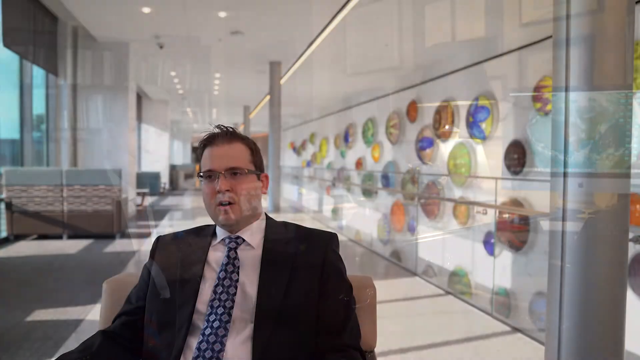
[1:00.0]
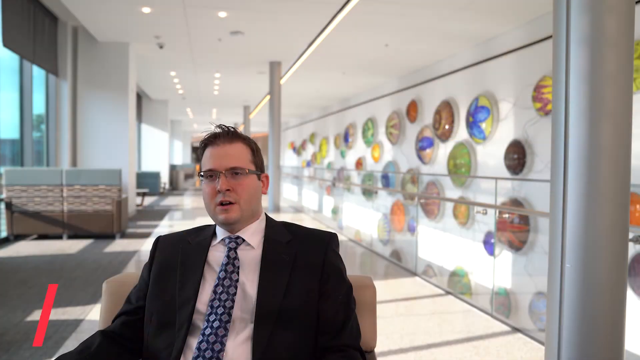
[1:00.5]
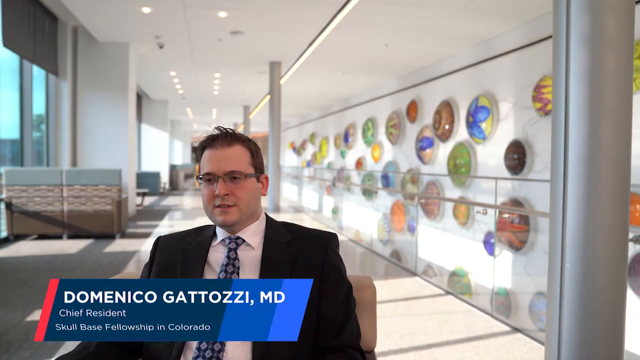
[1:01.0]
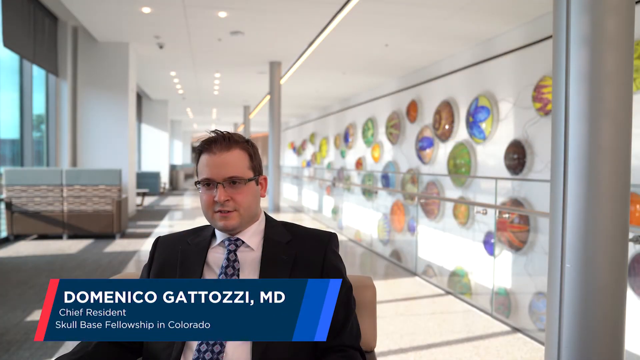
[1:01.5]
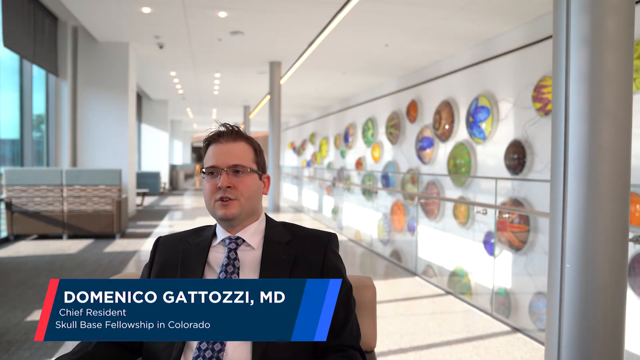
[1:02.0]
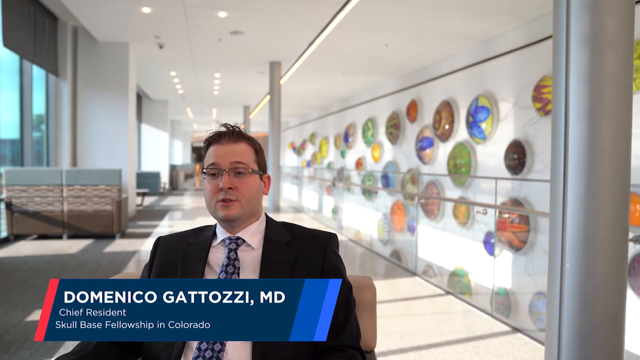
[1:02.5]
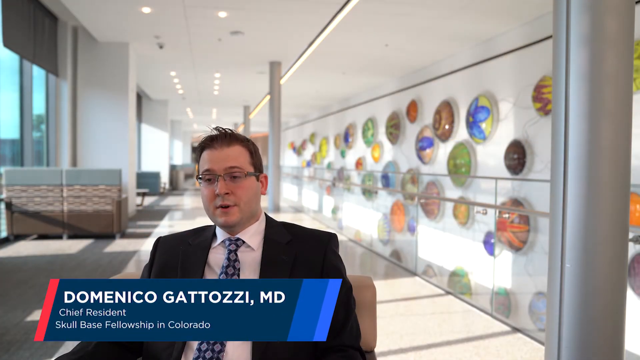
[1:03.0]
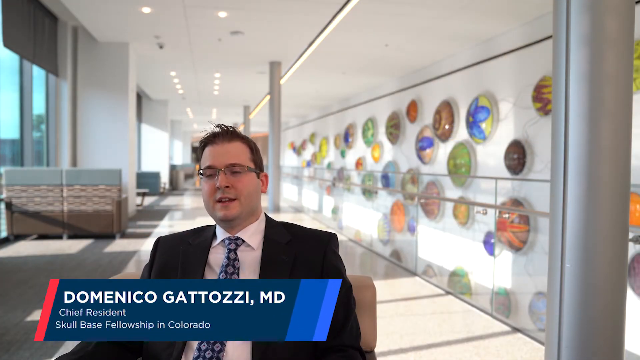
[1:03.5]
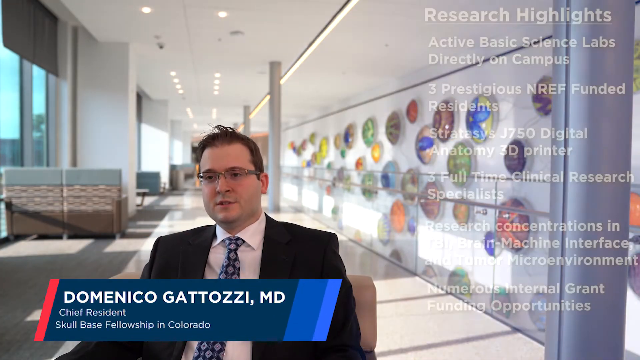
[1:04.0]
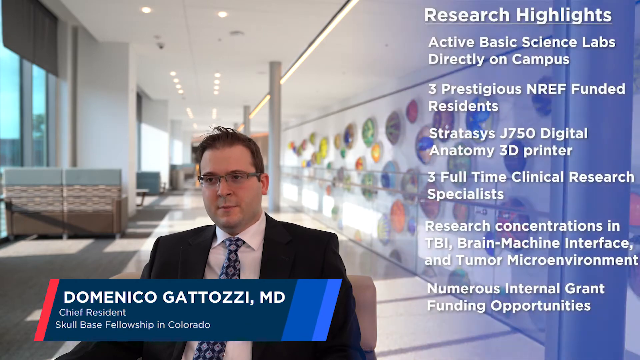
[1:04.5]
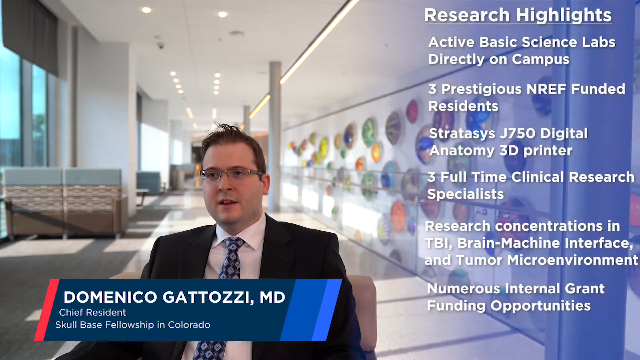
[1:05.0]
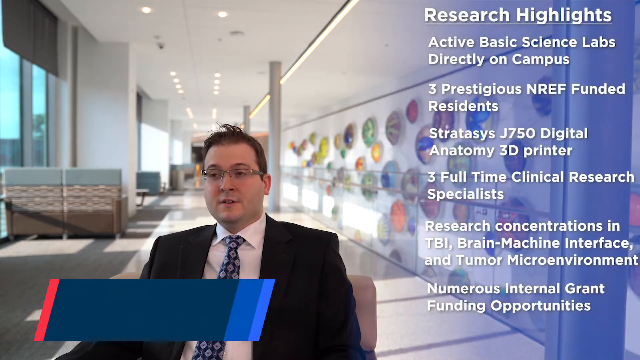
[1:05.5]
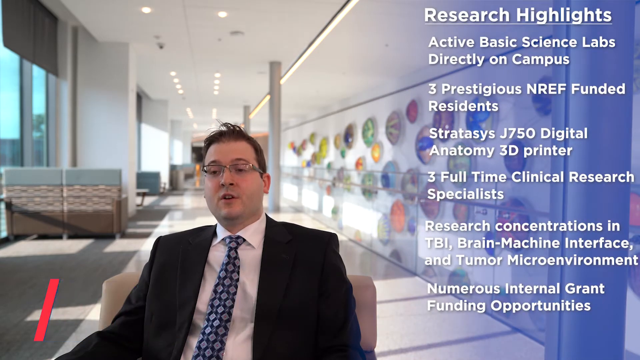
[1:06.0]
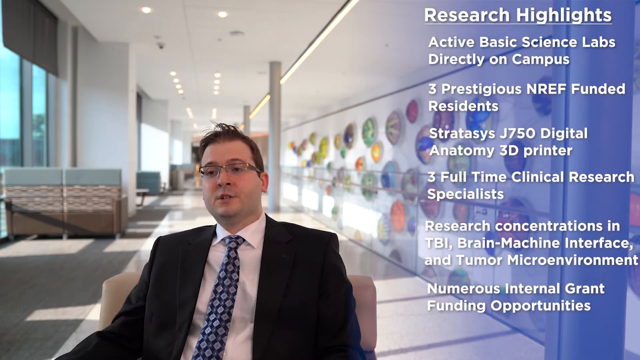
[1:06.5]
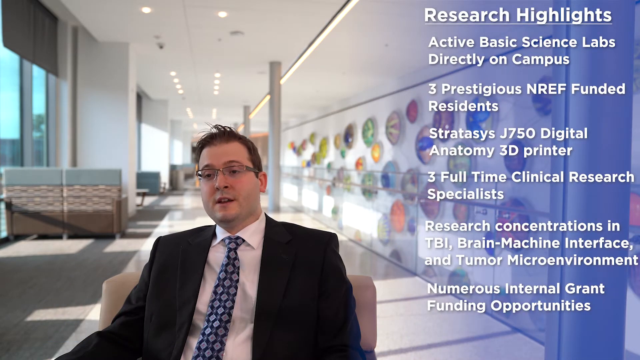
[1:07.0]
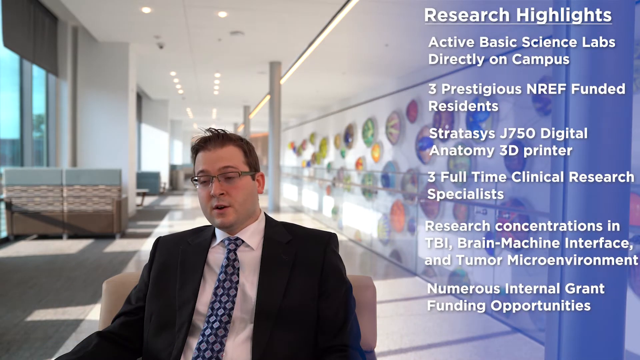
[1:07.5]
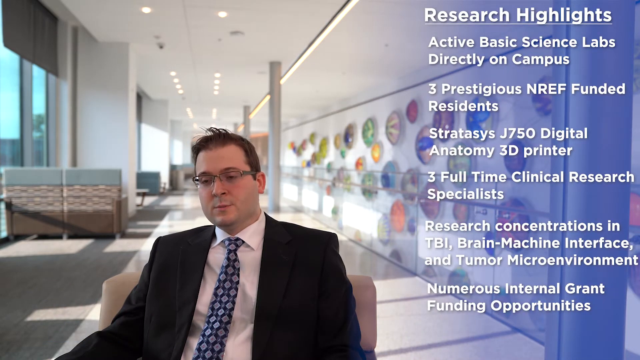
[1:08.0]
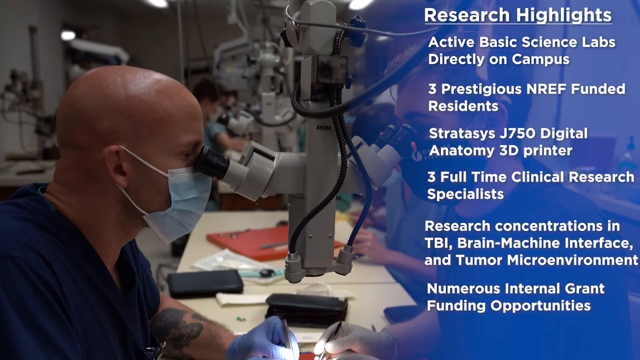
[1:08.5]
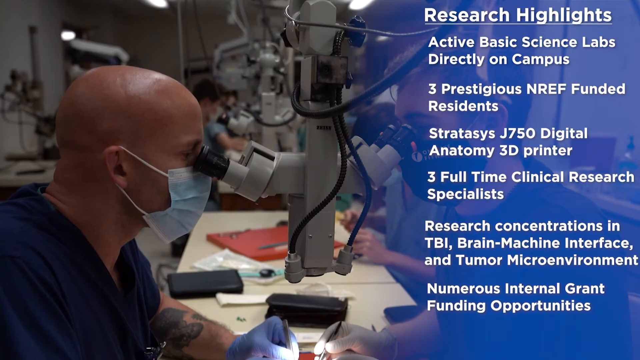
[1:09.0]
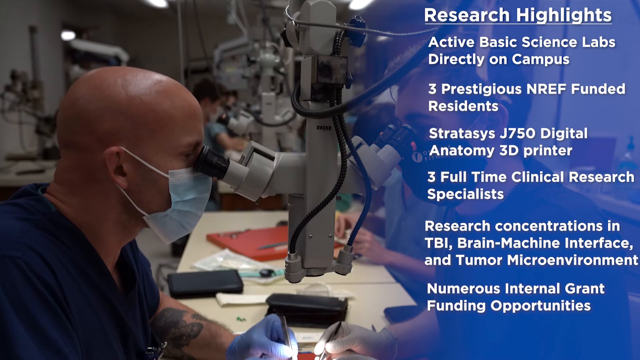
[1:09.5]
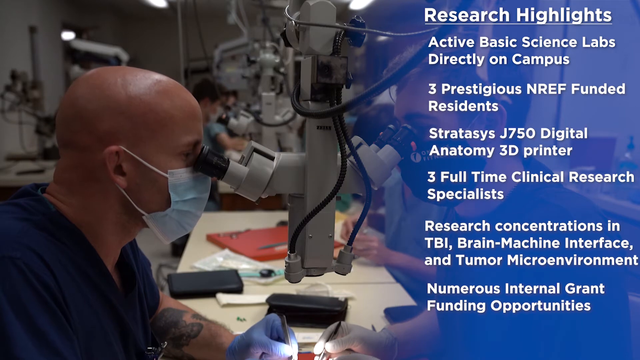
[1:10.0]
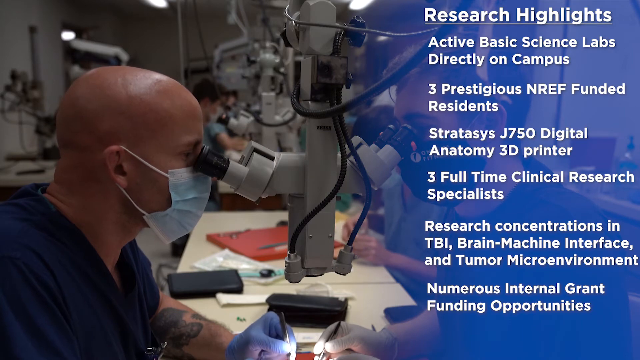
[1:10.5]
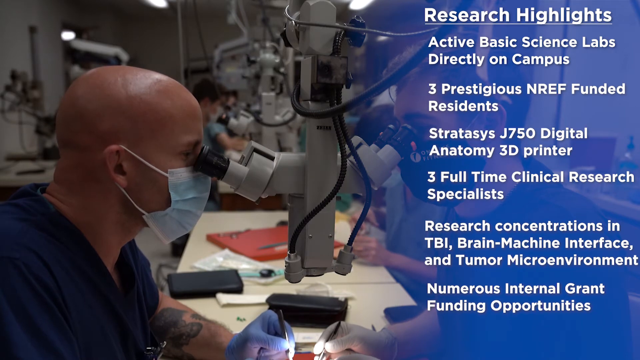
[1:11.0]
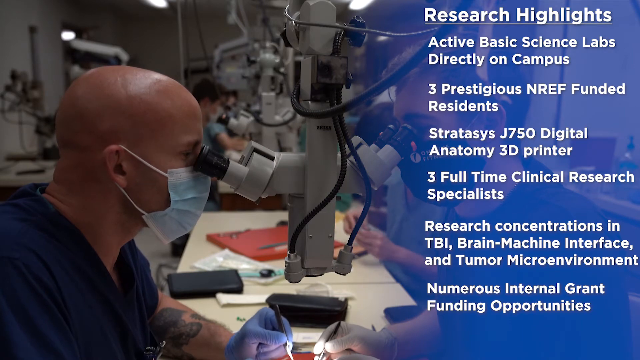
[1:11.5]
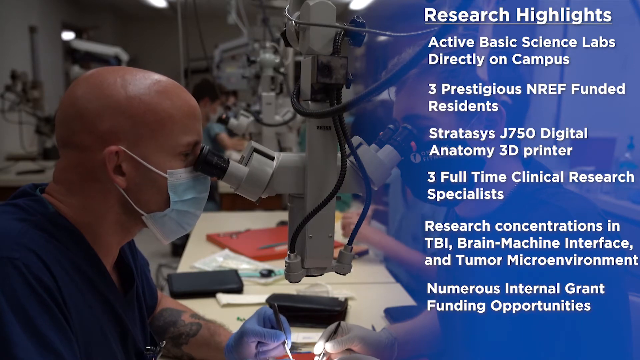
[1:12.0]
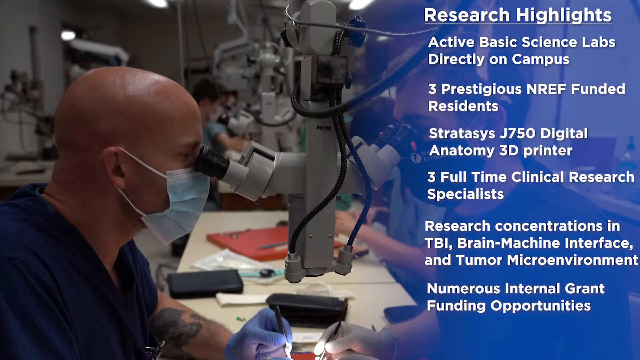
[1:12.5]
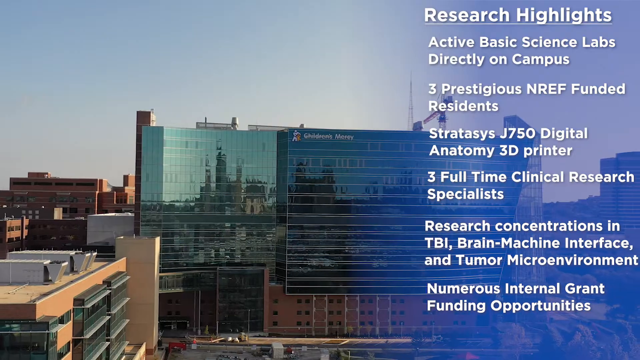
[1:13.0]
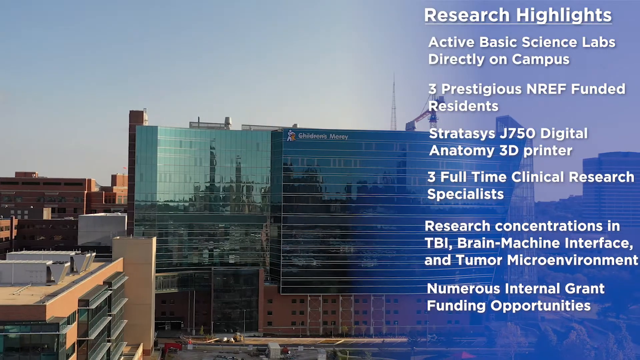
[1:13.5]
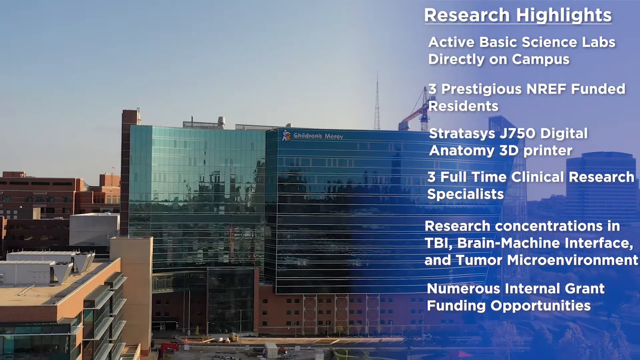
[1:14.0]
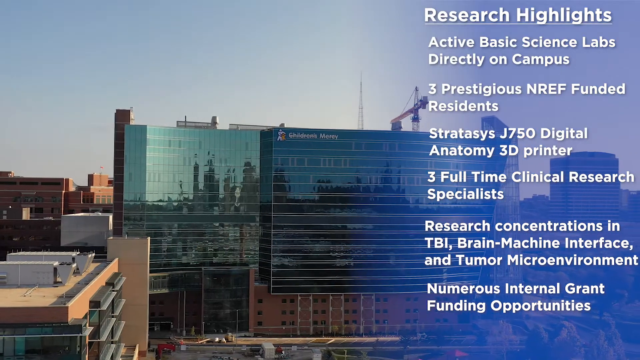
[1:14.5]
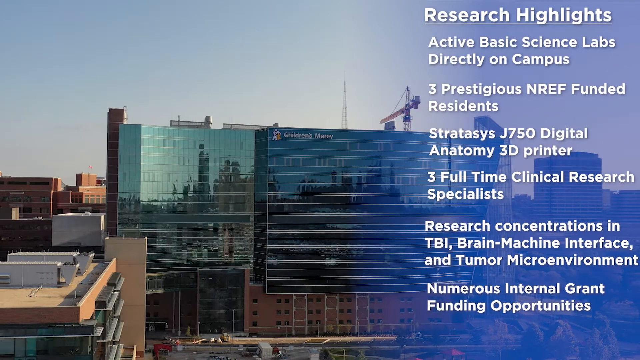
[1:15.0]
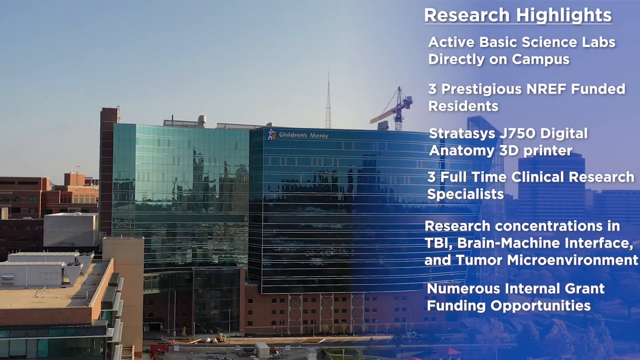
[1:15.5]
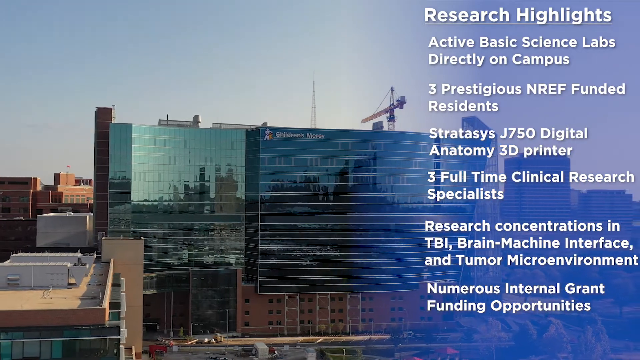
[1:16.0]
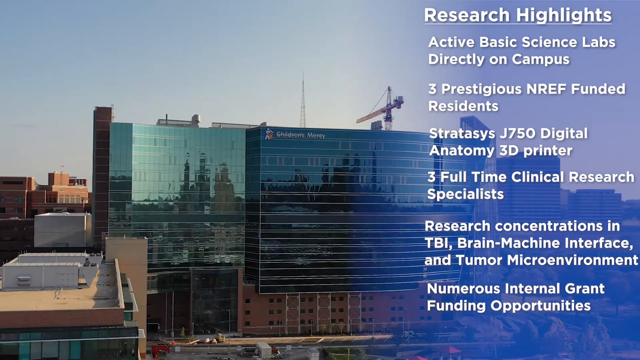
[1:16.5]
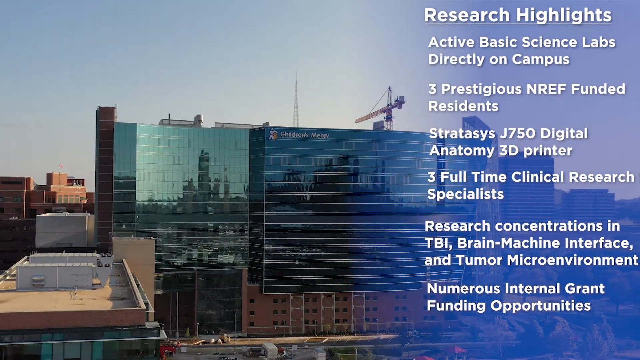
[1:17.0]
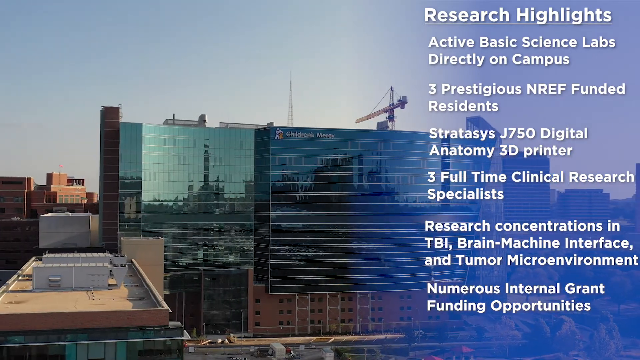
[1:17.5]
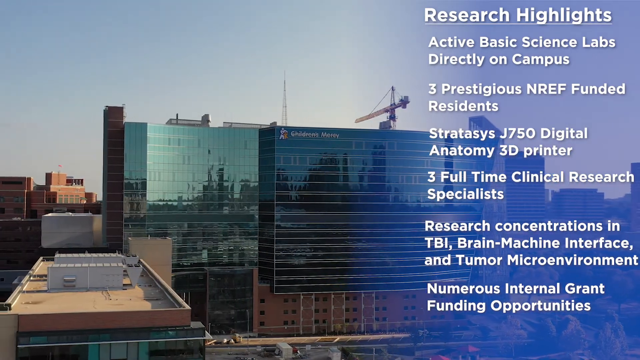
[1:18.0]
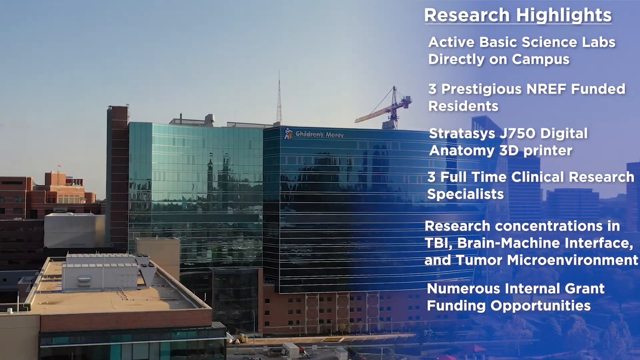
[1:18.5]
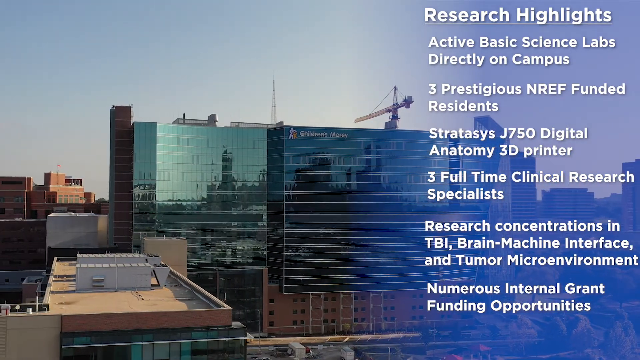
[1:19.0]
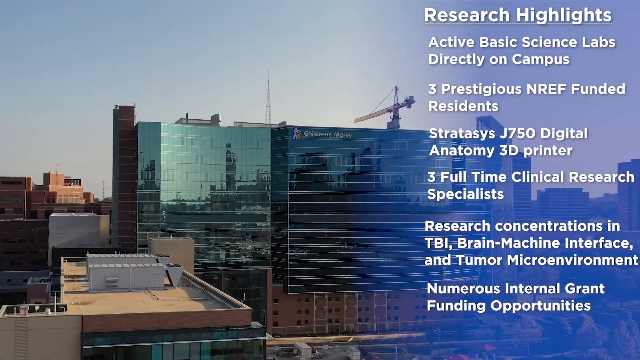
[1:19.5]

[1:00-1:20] A white man, probably in his 30s, sits in a chair. He wears a black jacket, a white shirt, glasses and a tie that is sort of bluish with white shapes on it, and has short brownish hair. His name appears at the bottom middle: "Domenico Gattozzi", along with "MD". The room has white walls and a white ceiling, and on the right side large objects hang on the wall, apparently very smooth-looking shields. He looks downwards off camera as he talks and gestures, raising his eyebrows slightly. His name disappears, and white text reading "research highlights" appears on the right side over a sort of blue hue. He keeps talking to the person off camera. The scene switches while the highlights panel on the right stays: in the footage, two white men in the foreground, both wearing doctor's masks and blue outfits, look through a sort of device they put their eyes into. In the background other doctors are in front of a table, and a doctor in the middle behind them, a woman, makes a lot of hand movements as if holding devices and placing them down onto the table. The scene changes to an outside view of the large building as the camera glides to the left.